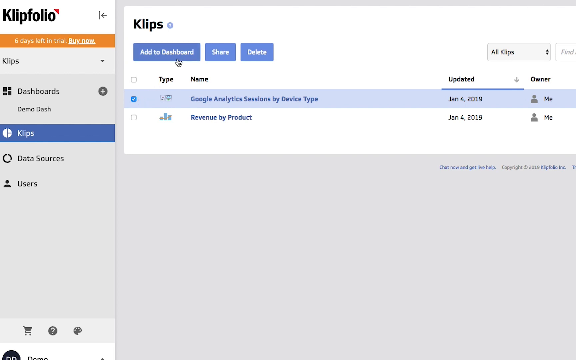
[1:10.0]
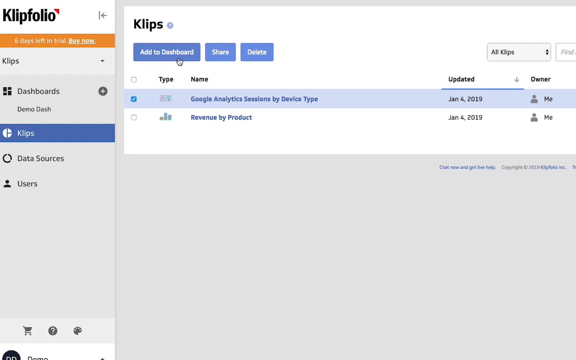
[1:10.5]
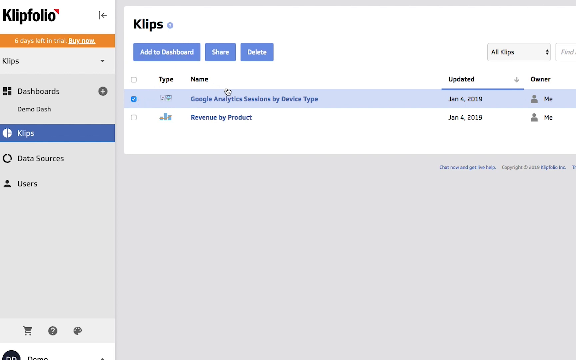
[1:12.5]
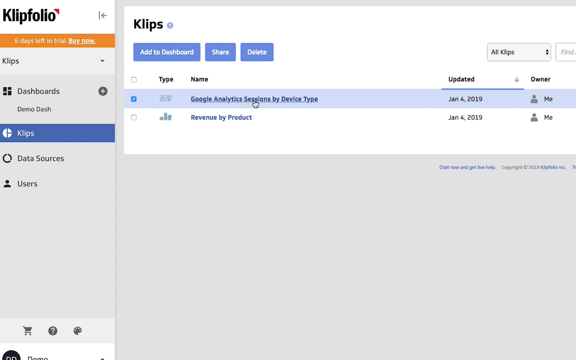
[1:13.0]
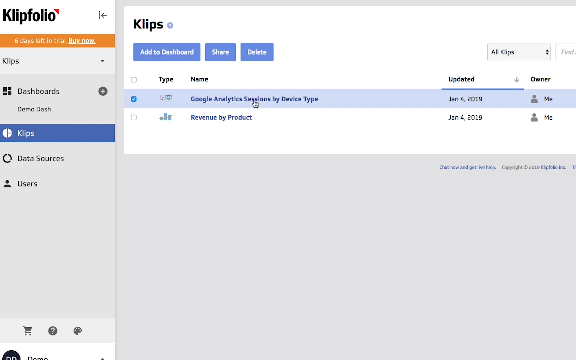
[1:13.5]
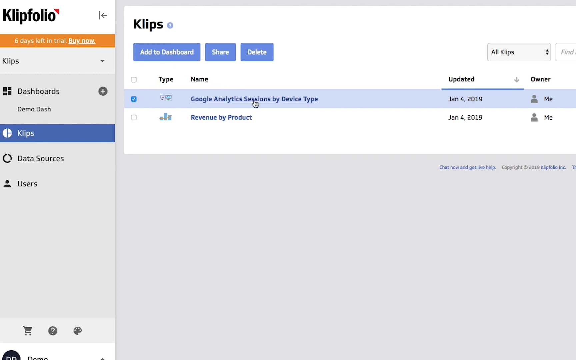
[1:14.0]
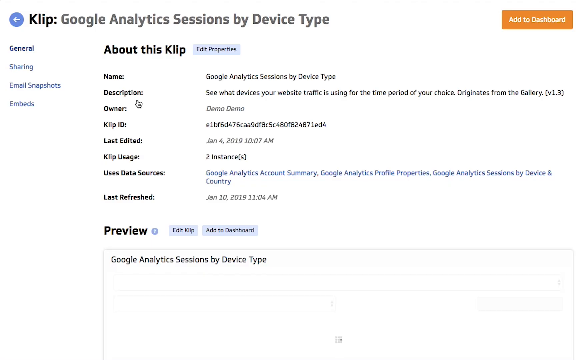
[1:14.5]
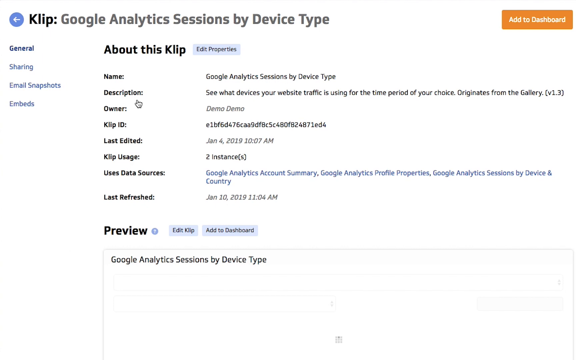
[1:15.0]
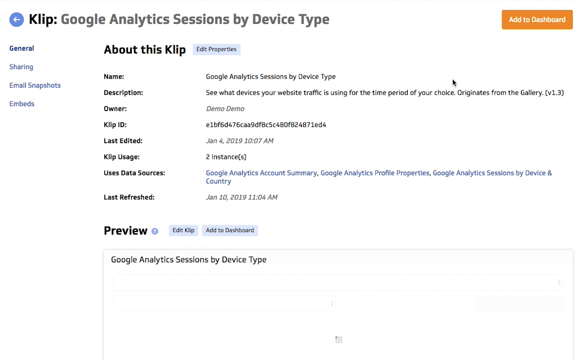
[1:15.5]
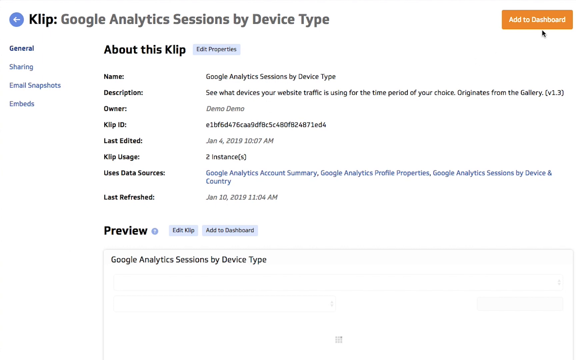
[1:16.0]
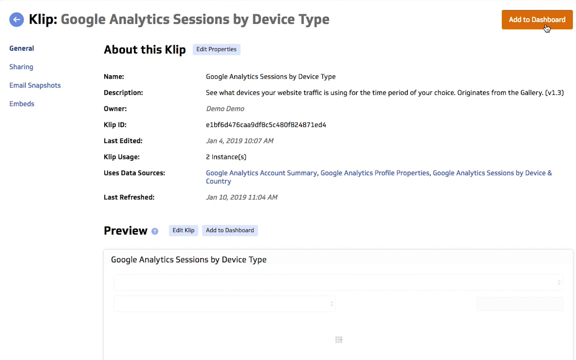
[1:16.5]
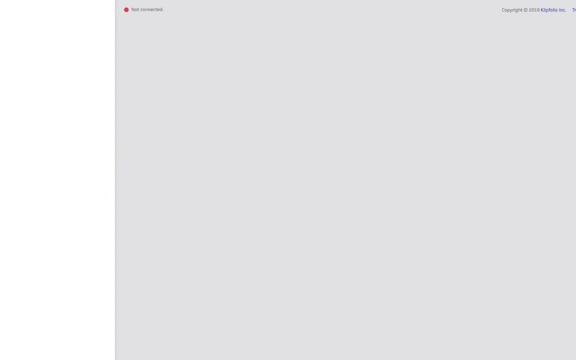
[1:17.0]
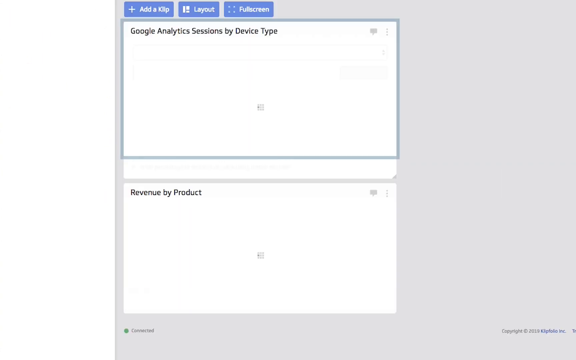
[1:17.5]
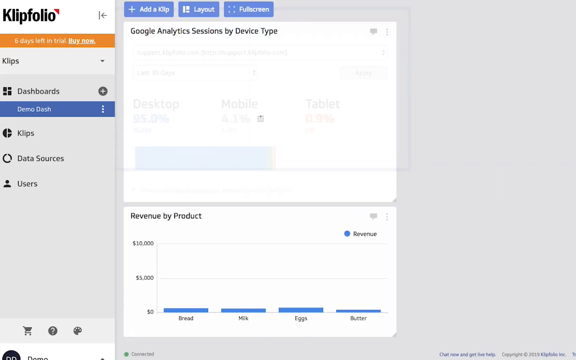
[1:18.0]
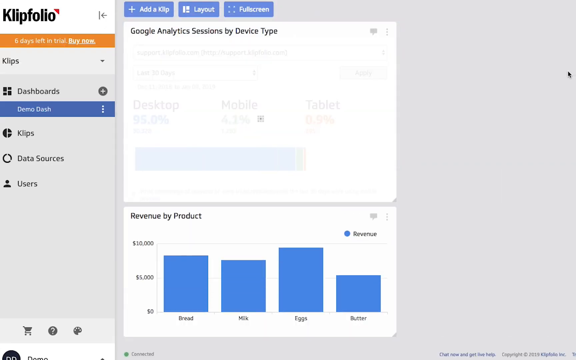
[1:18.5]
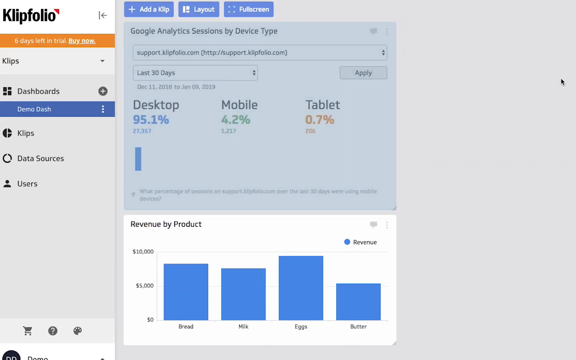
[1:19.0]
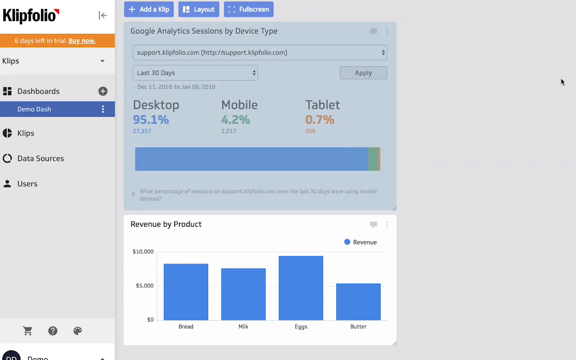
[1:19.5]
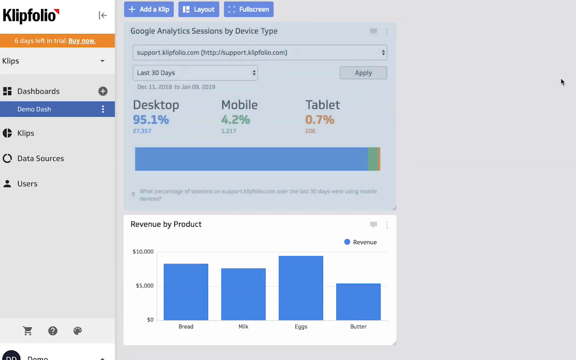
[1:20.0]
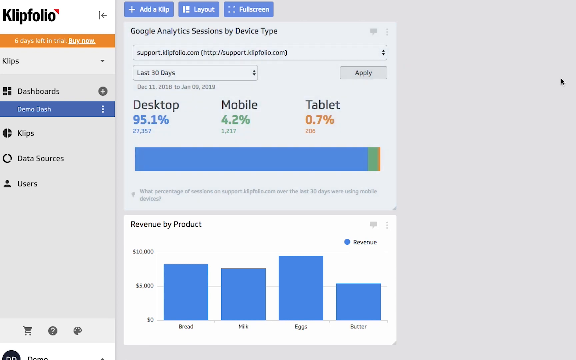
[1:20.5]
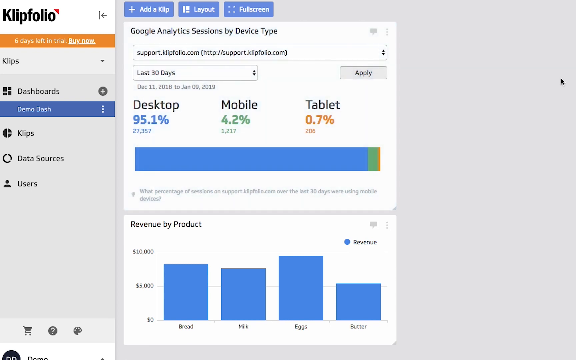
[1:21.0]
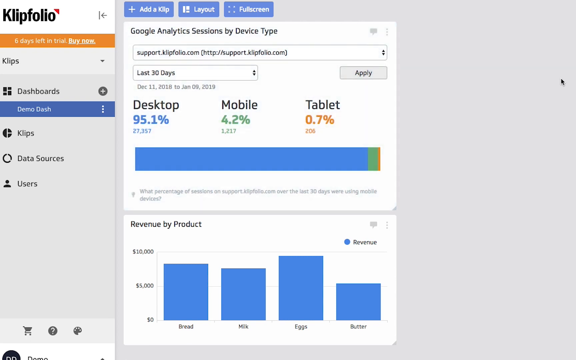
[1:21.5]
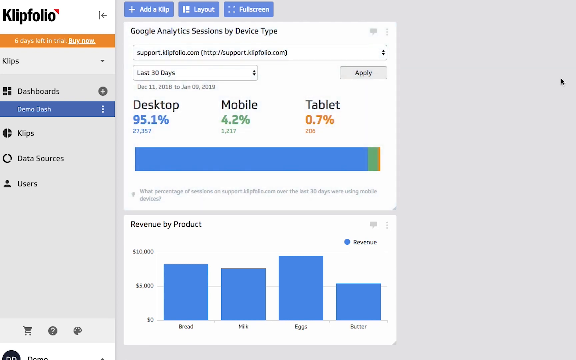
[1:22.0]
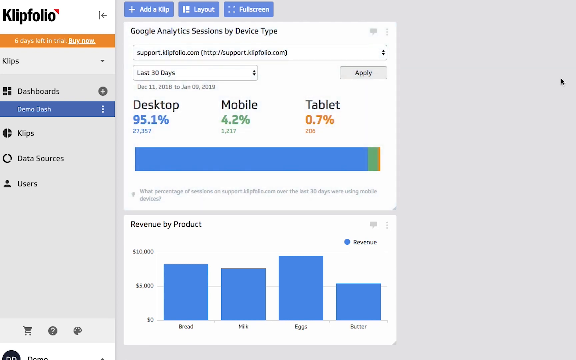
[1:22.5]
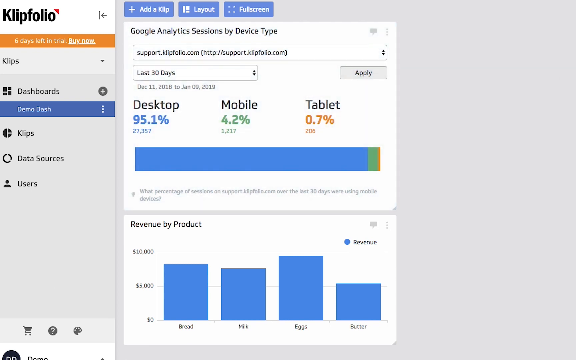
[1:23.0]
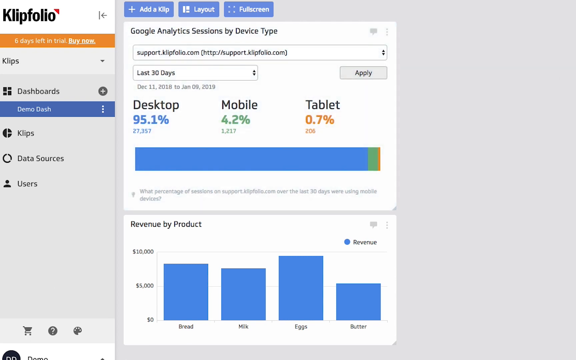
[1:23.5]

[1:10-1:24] The same screen remains. After Google Analytics is clicked, it shows desktop 95.1%, mobile 4.2% and tablet 0.7%. The screen moves quickly. It also shows "revenue by product," which perhaps suggests a business that sells something. A last-edited date is displayed, and the owner is listed as "demo demo."